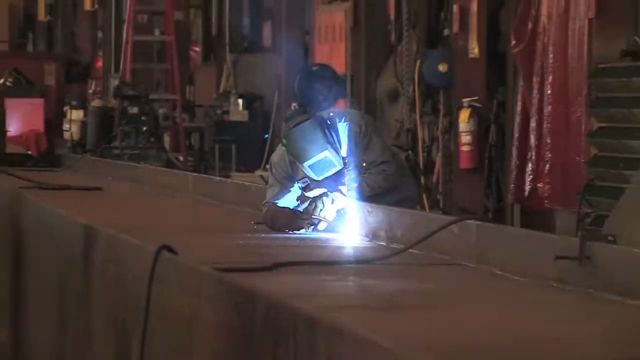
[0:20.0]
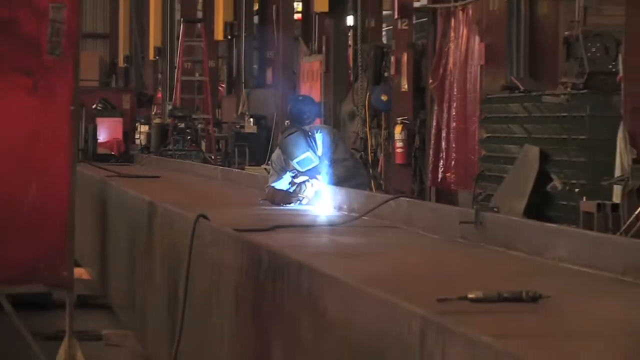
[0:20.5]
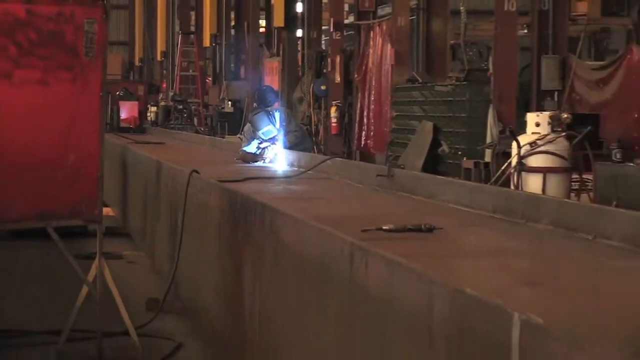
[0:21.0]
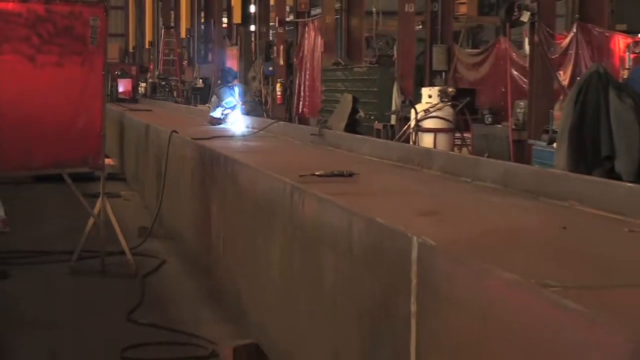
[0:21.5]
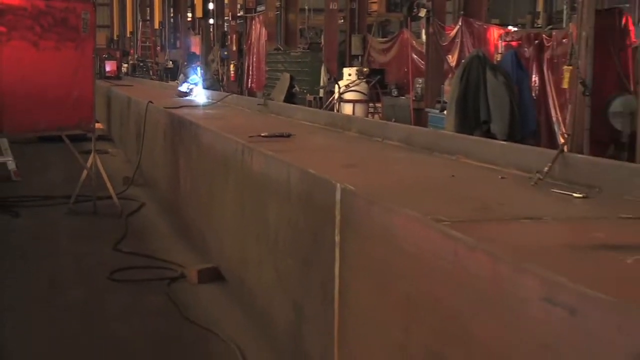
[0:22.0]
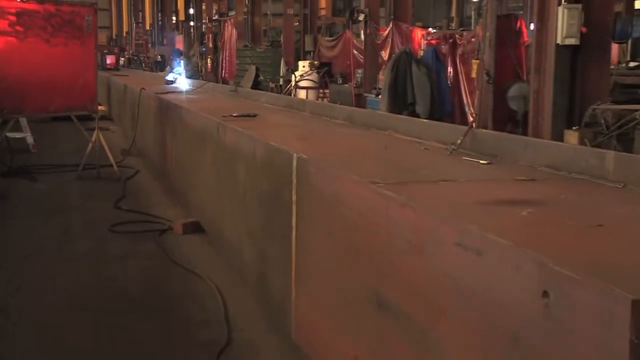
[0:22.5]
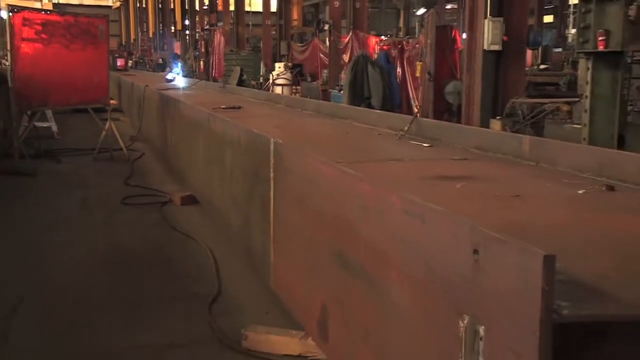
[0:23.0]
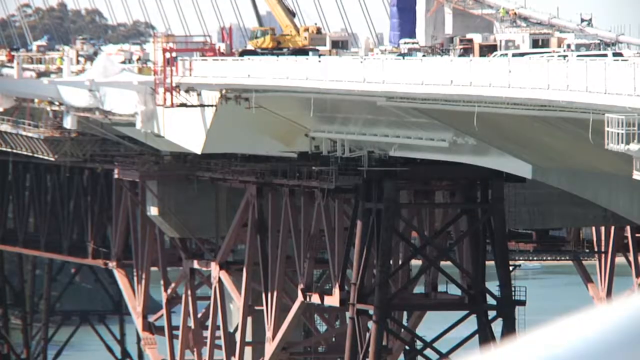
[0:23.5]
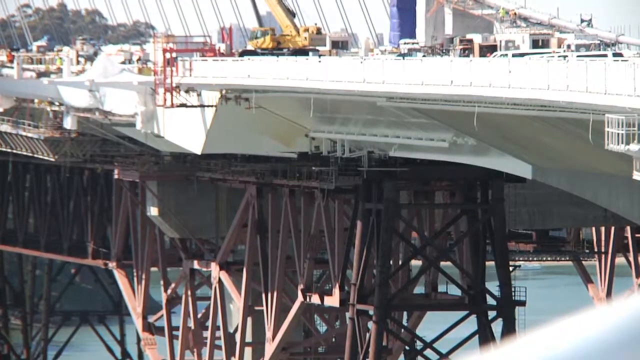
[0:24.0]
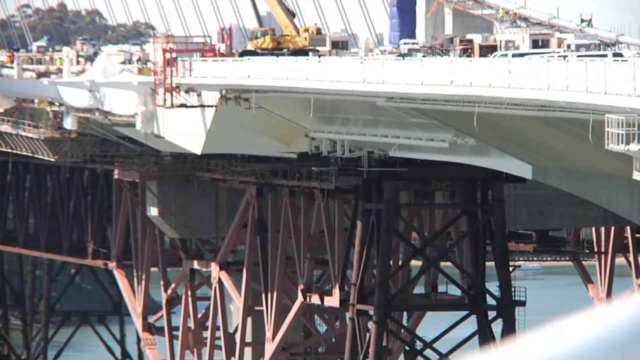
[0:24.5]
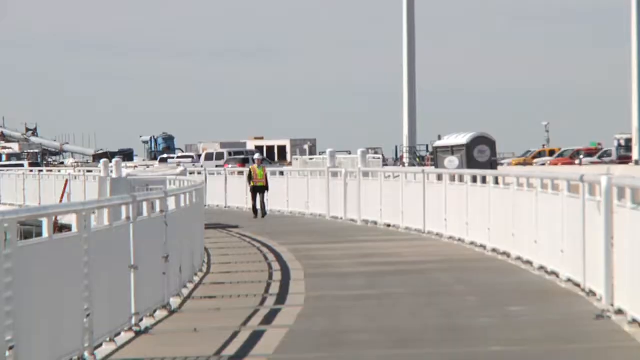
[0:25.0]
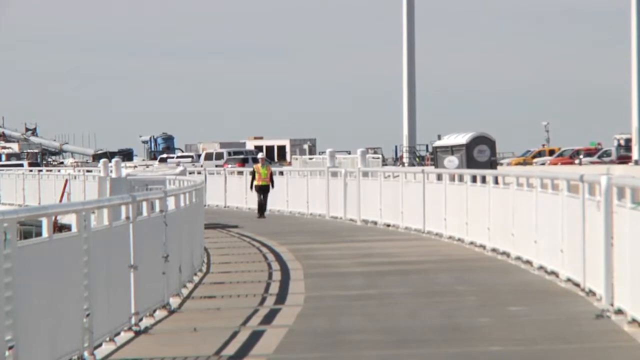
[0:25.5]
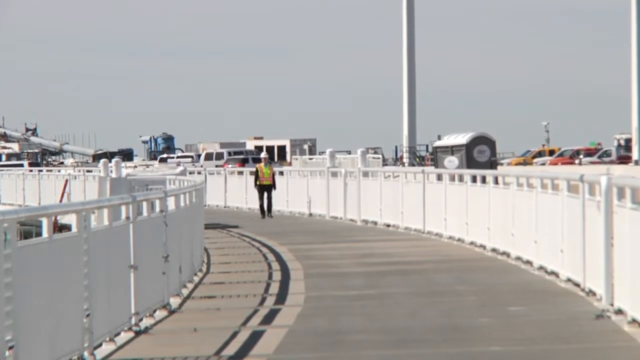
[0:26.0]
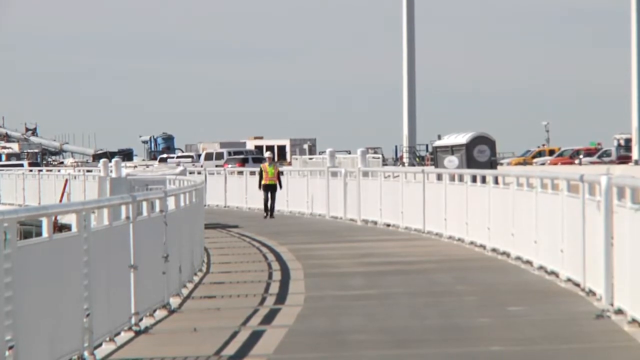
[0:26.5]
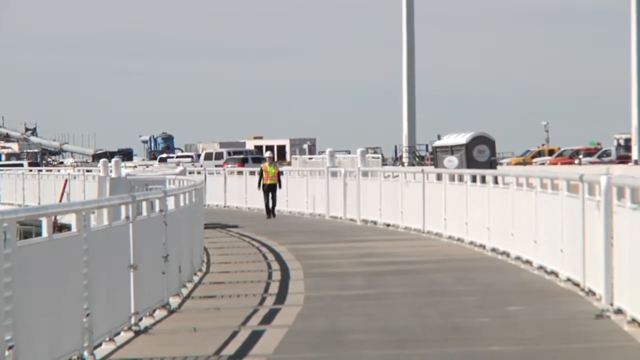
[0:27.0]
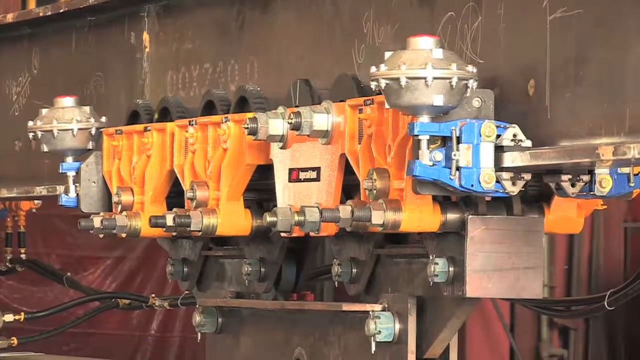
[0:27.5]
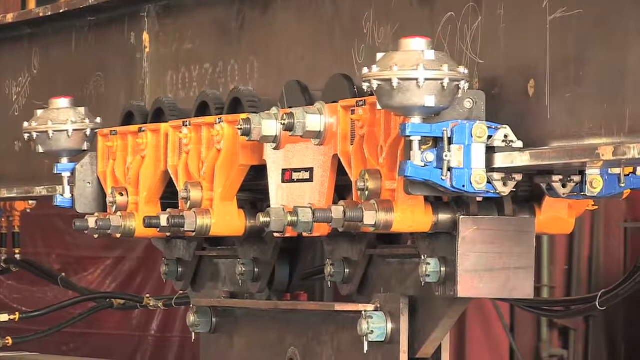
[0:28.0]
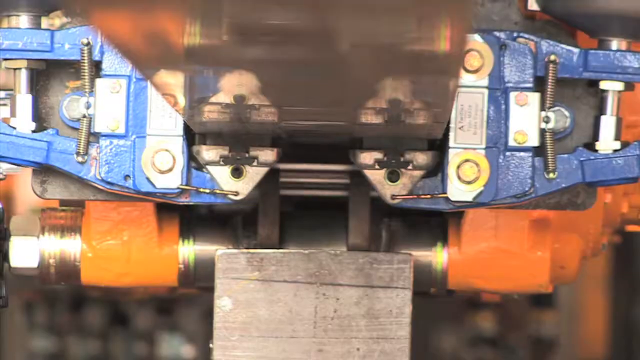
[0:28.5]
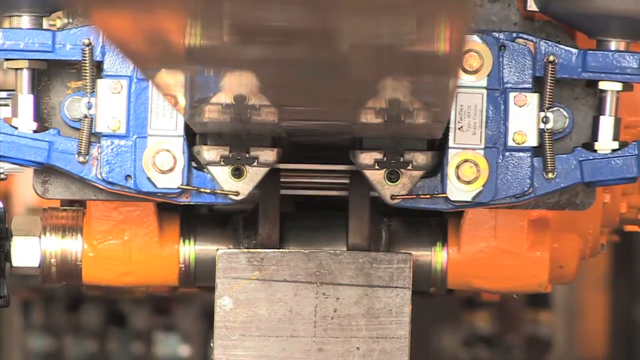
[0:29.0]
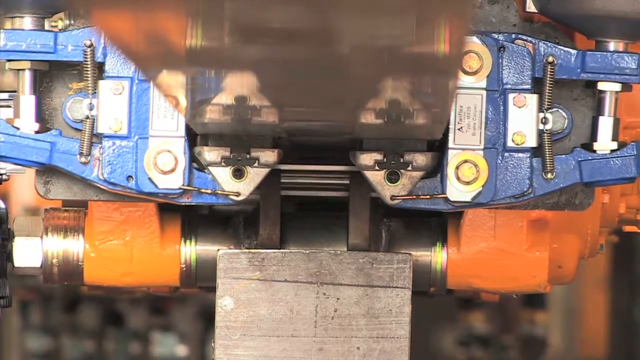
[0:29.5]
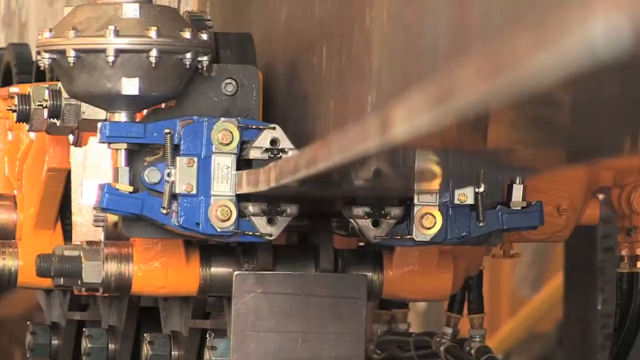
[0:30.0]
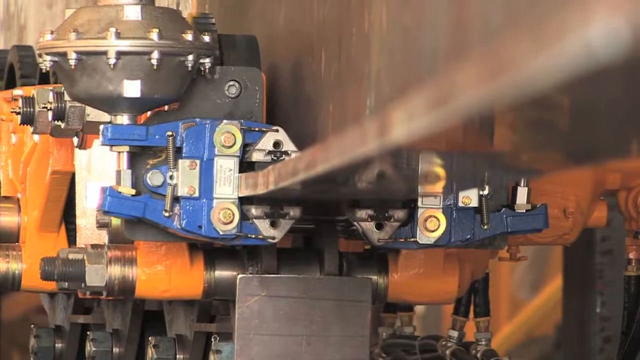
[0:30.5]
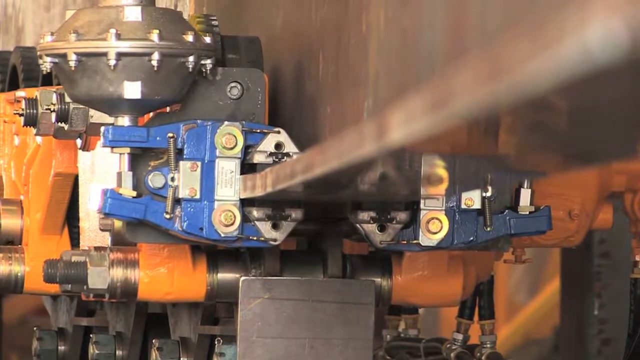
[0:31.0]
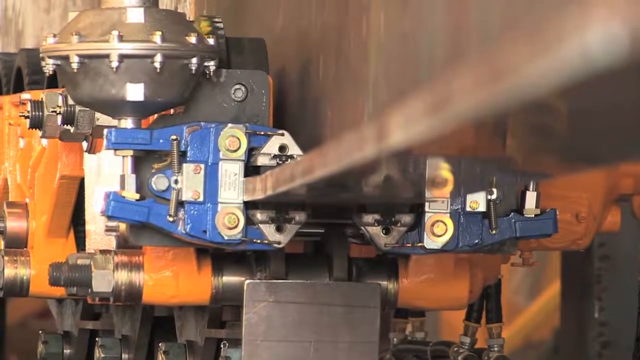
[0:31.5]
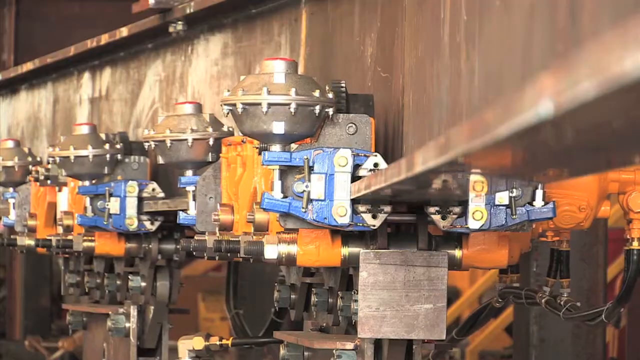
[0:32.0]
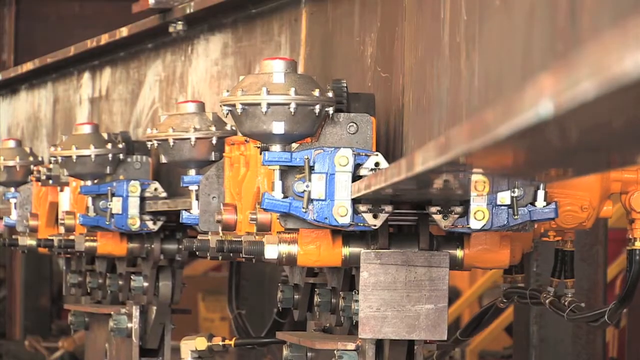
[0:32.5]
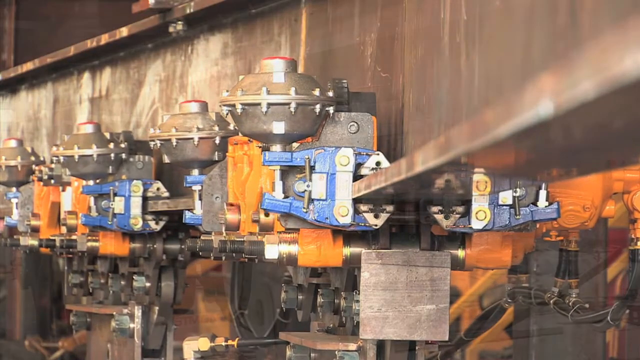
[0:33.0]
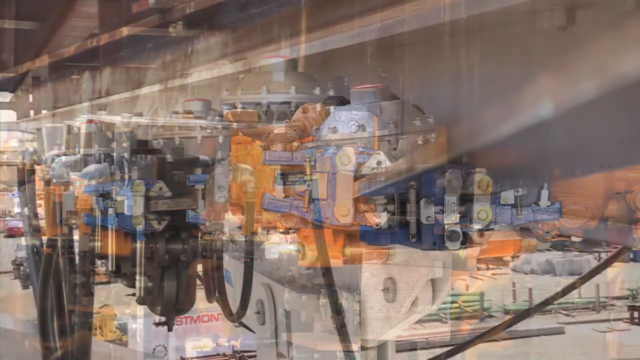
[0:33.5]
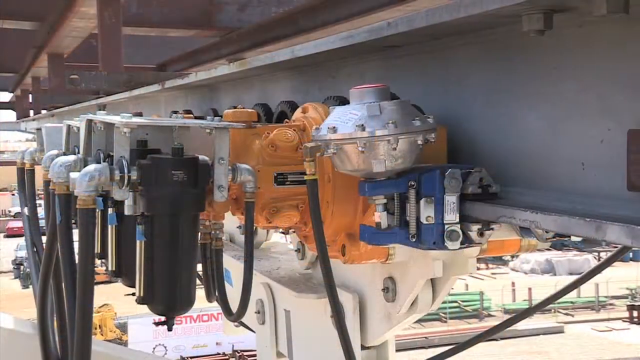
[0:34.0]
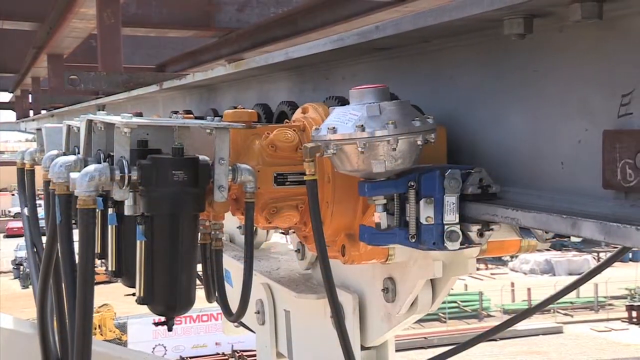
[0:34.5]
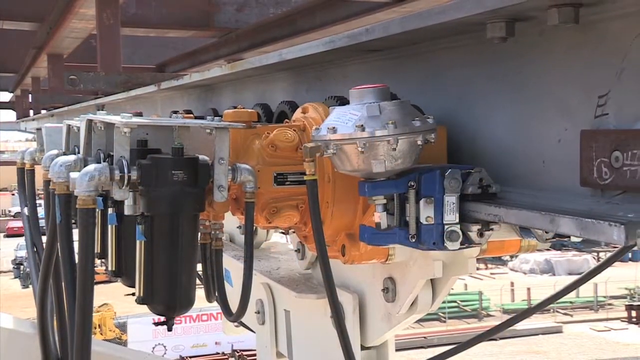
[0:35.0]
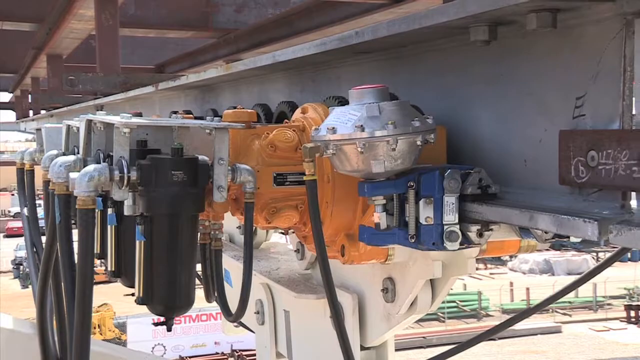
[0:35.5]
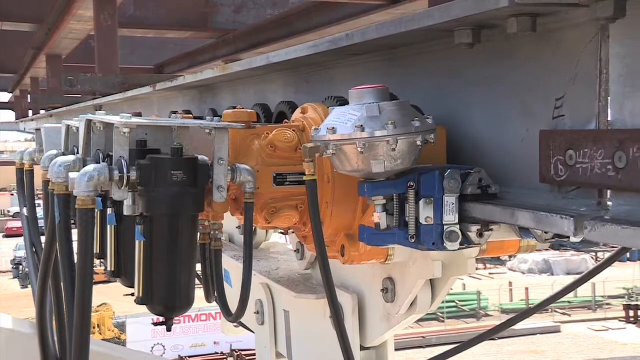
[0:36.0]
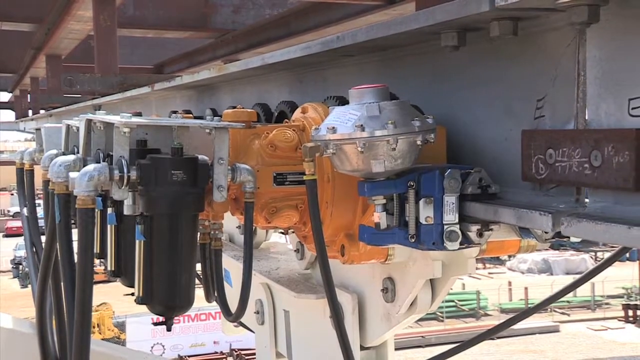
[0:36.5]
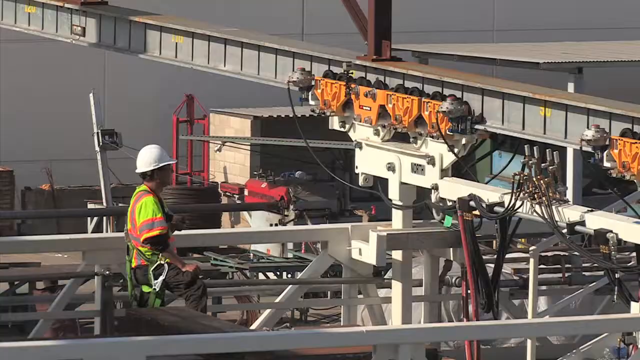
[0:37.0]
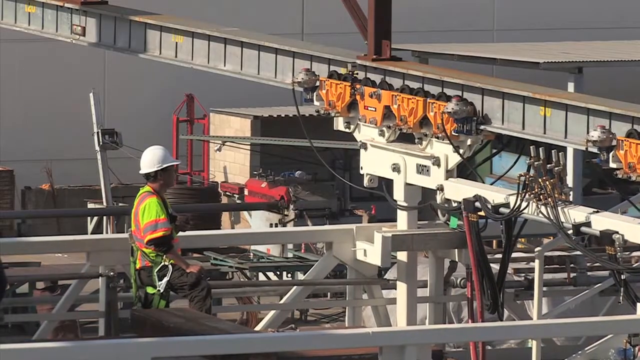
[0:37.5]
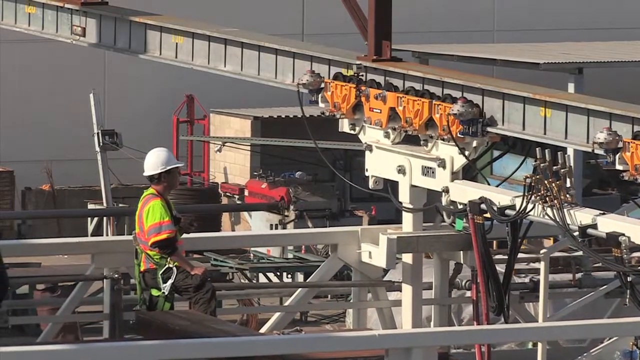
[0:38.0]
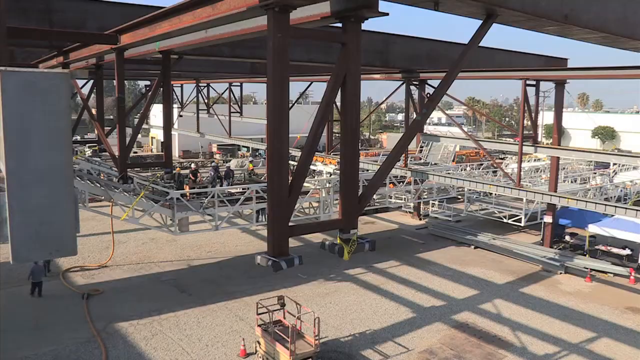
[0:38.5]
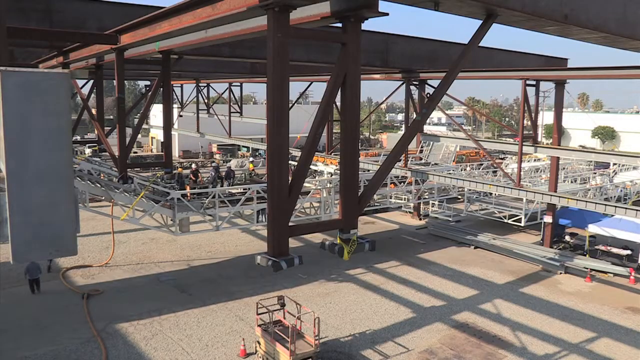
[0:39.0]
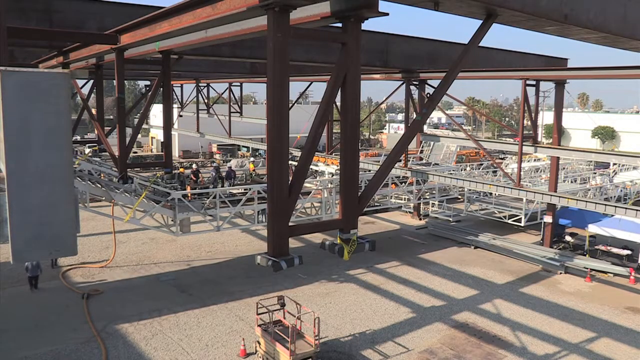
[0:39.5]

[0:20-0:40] The camera is up close on the man who is welding. He wears the traditional welding mask, gloves and a long-sleeve shirt, and the fire extinguisher is visible behind him. He holds some kind of black cord that is causing the sparks. The camera pans back to show the long, rectangular, somewhat concrete-slab-like table he is working on. The scene shifts to a sort of white item built up on posts; the posts look like they might be in the water. A construction worker in an orange vest and a white hat walks along a sort of road area with a white fence on either side of him, and cars, port-a-pots and trucks are somewhat visible in the background. The scene shifts back inside, probably to some kind of factory, where a machine with orange, blue and silver parts moves along a track, showing how it works; there might be a chalkboard drawing in the background. A construction worker in a white hat and an orange and green vest is shown up above, looking at machines. A side-angle shot shows workers on top of different beams and gray posts, working on moving things.